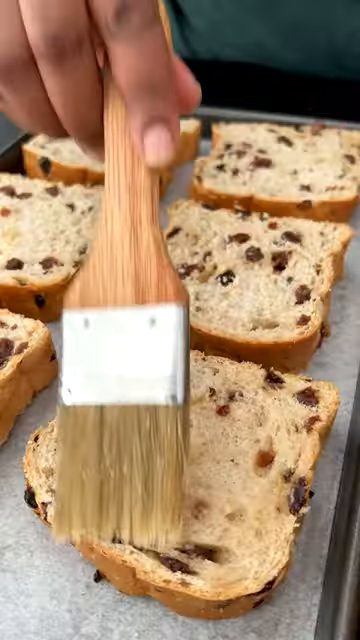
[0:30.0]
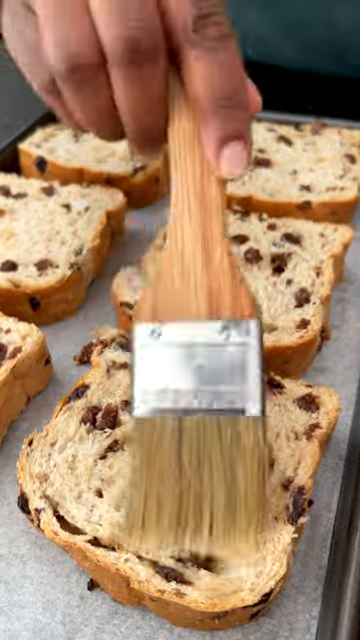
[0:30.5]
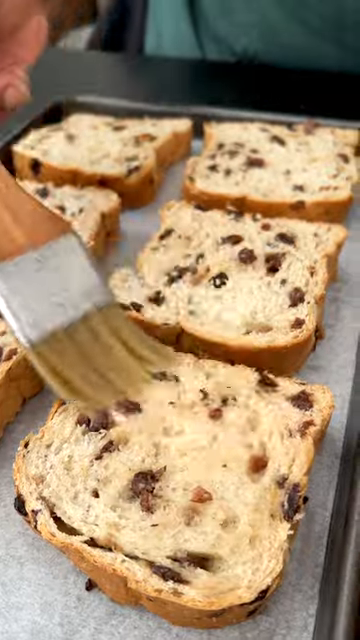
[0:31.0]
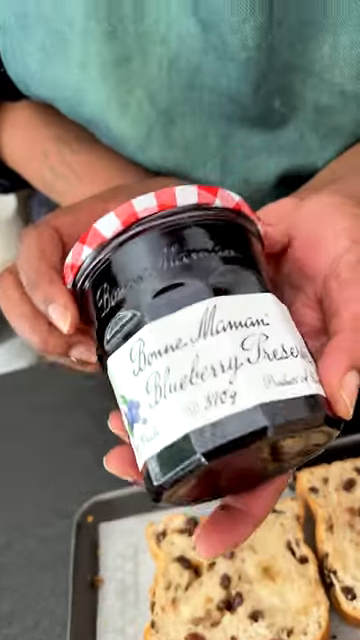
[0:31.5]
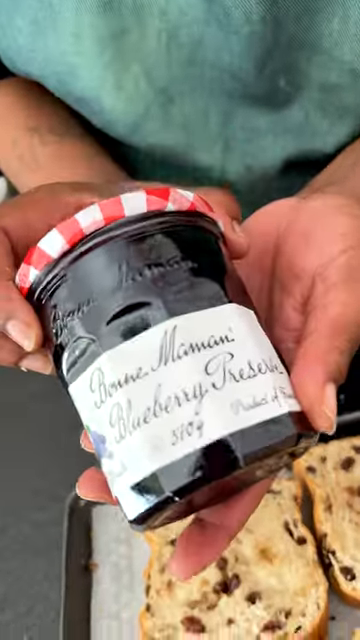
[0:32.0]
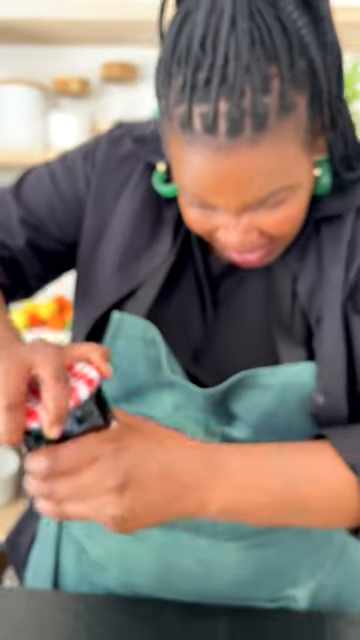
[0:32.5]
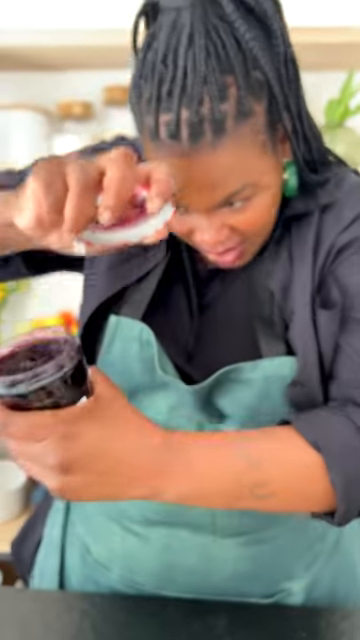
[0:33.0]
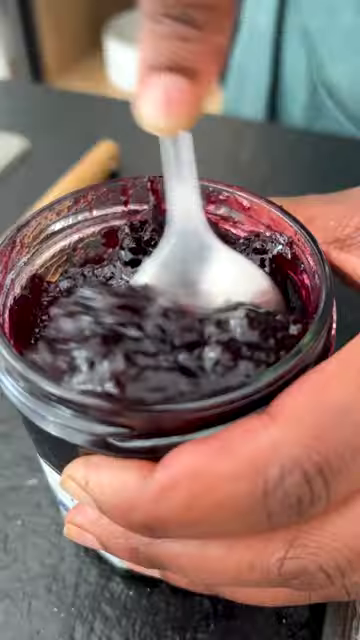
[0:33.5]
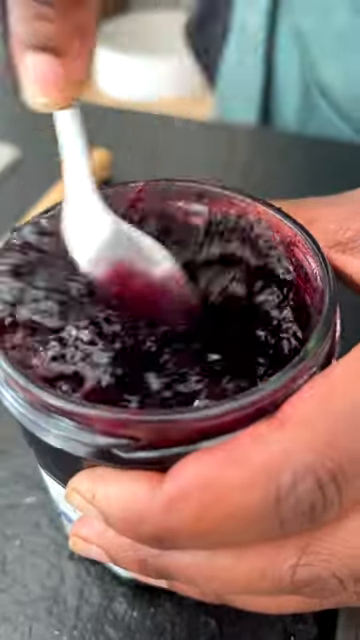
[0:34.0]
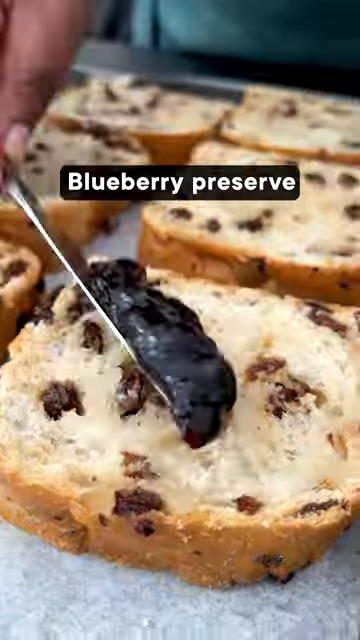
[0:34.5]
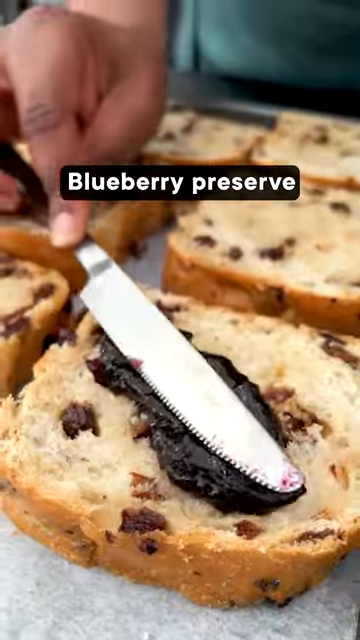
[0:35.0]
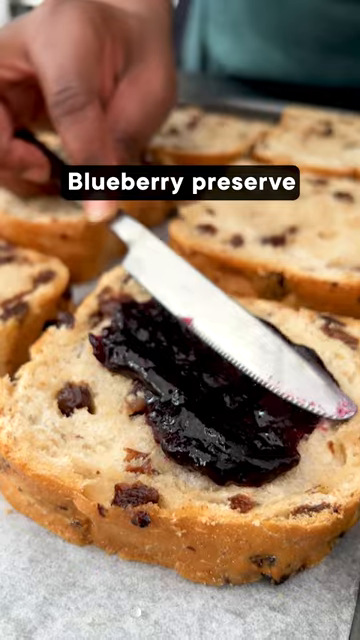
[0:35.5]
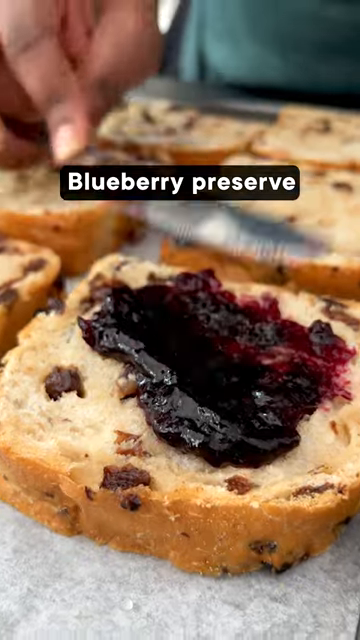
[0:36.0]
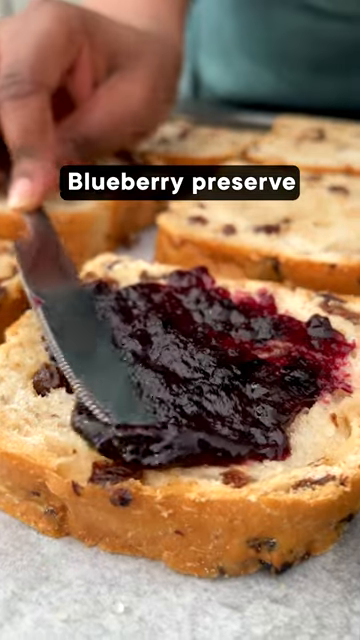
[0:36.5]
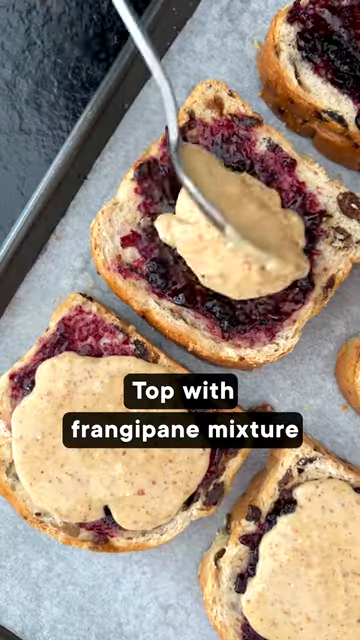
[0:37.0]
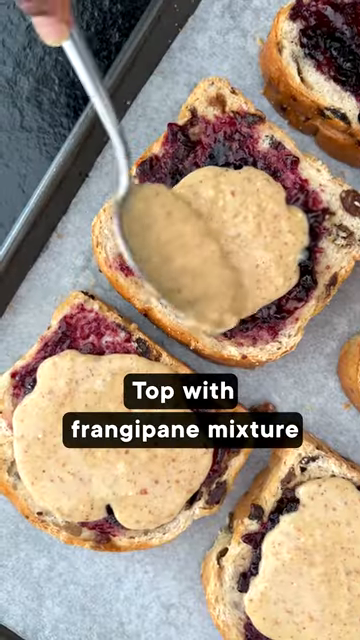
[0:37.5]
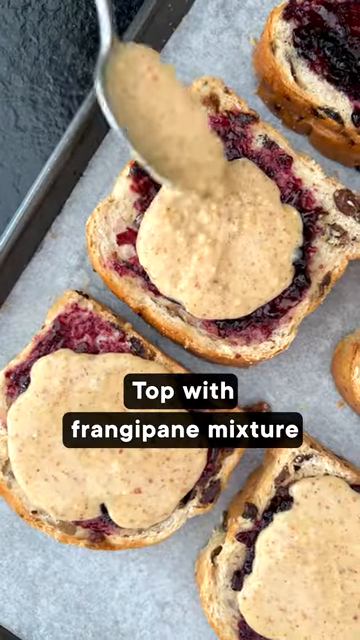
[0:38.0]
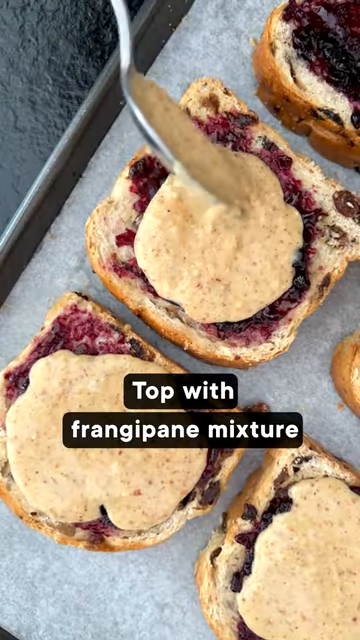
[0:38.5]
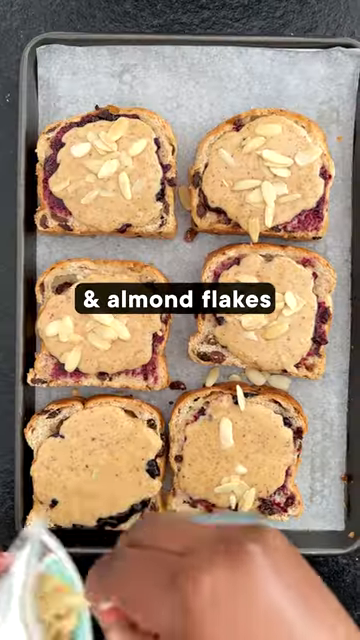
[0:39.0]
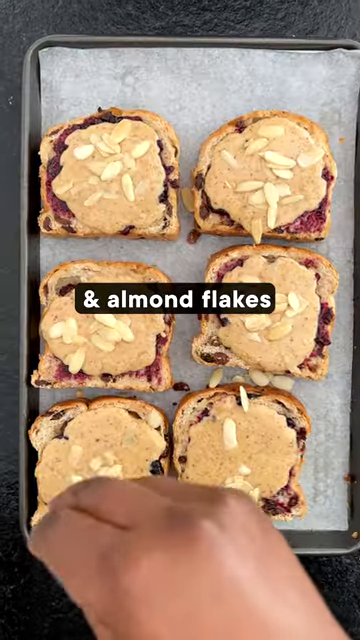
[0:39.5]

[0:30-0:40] She uses a brush to finish applying the glaze she made, then shows a jar of what looks like some type of blueberry preserve that appears to be locally made, judging by its label and lid. She shows the jar up close, her left hand holding it from below and her right hand holding the top. She opens the jar, stirs it with a plastic spoon and spreads the blueberry paste on top of the raisin bread with a knife. Next she spoons on frangipane mixture and spreads it across while the title "top with frangipane mixture" appears in white lettering. At the very end she adds almond flakes, with a title reading "almond flakes".